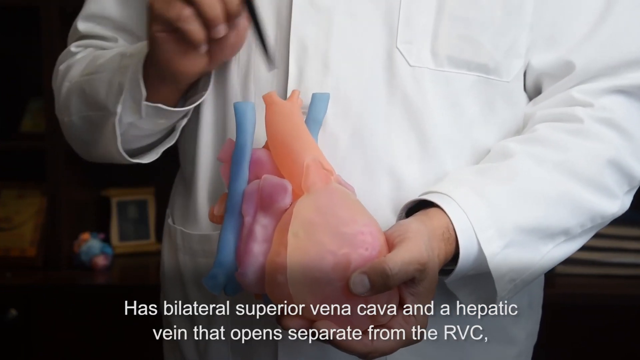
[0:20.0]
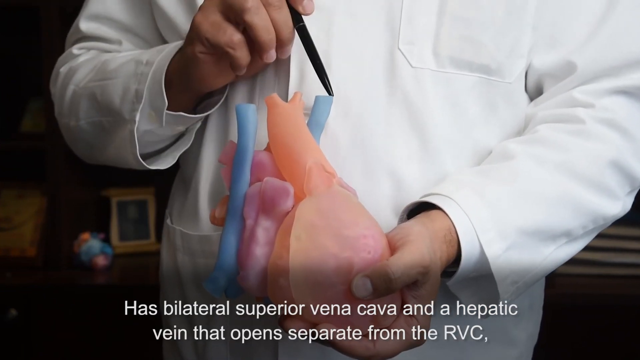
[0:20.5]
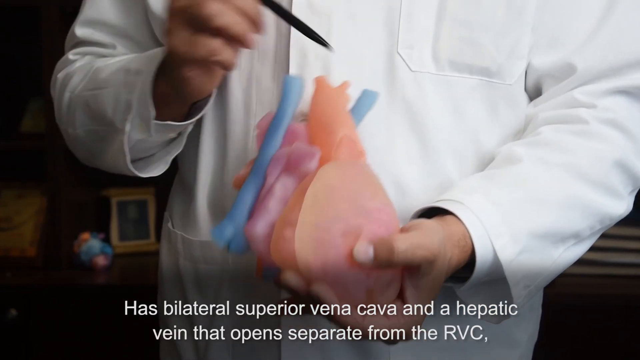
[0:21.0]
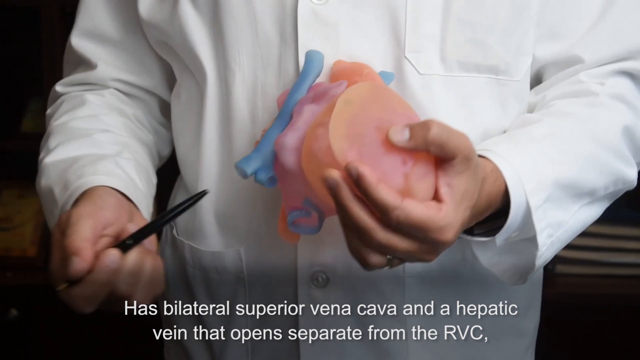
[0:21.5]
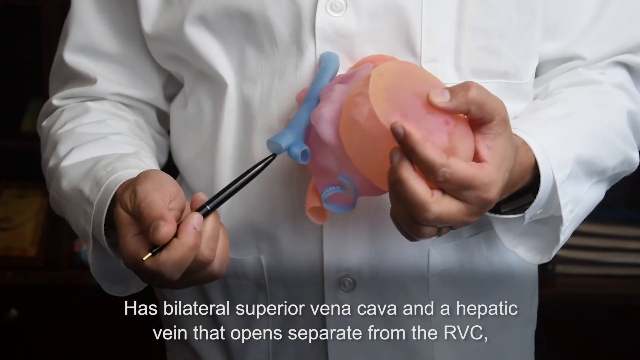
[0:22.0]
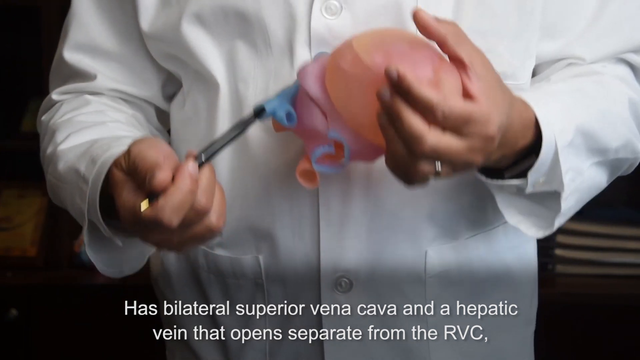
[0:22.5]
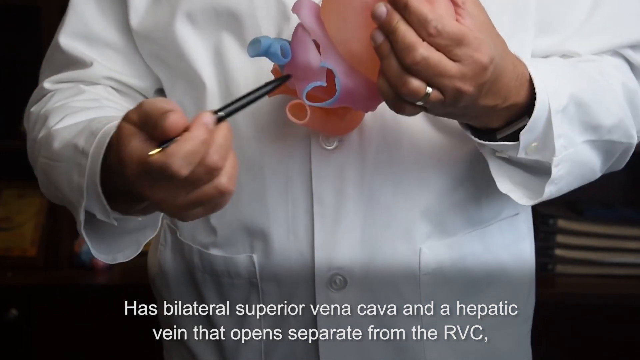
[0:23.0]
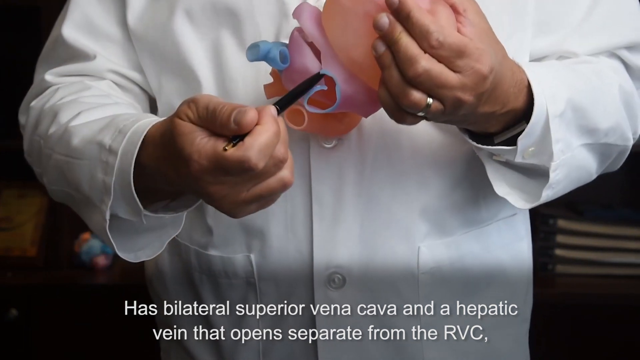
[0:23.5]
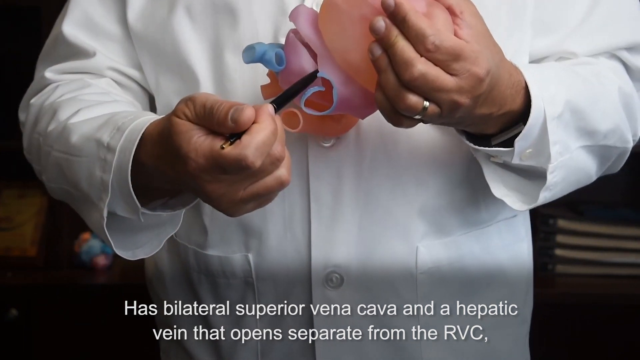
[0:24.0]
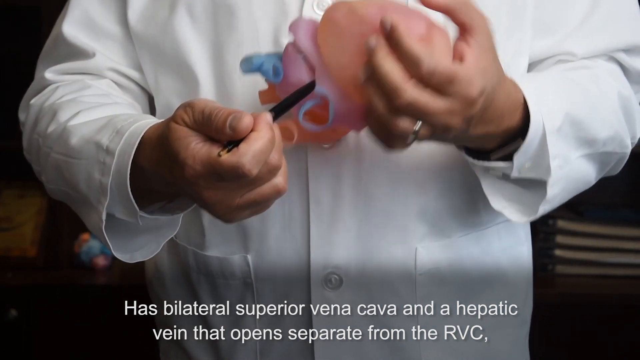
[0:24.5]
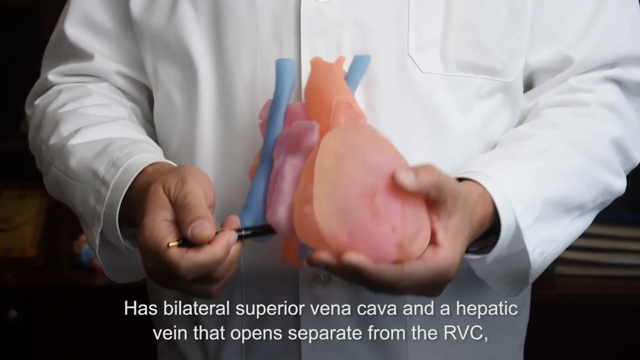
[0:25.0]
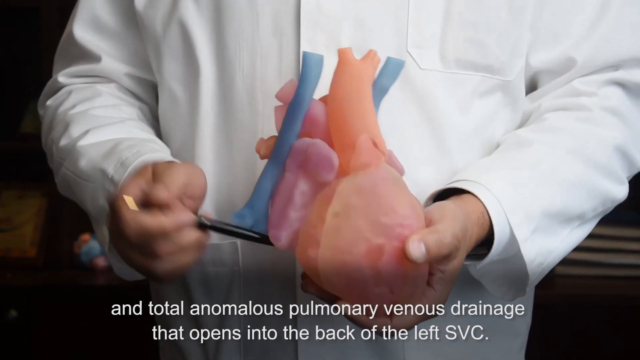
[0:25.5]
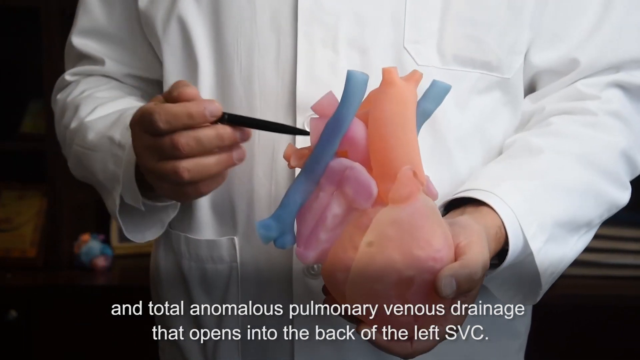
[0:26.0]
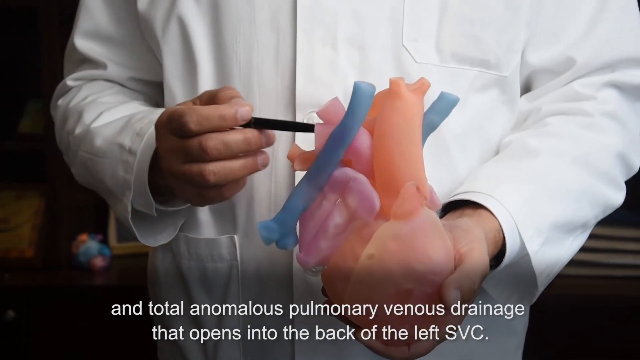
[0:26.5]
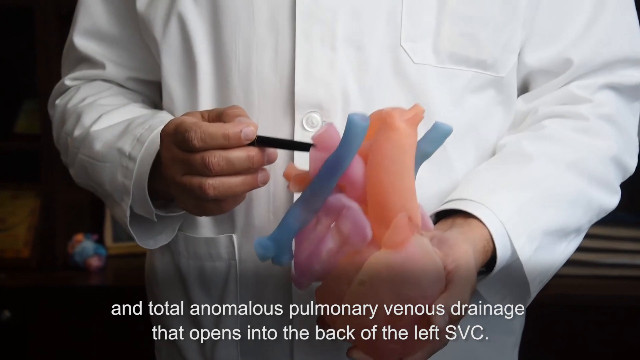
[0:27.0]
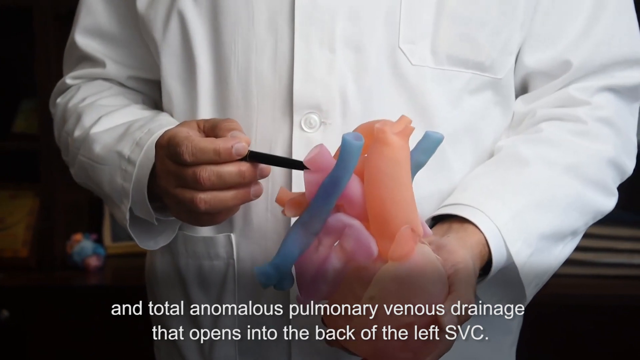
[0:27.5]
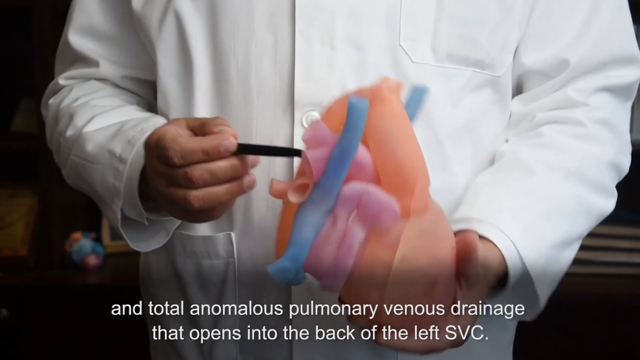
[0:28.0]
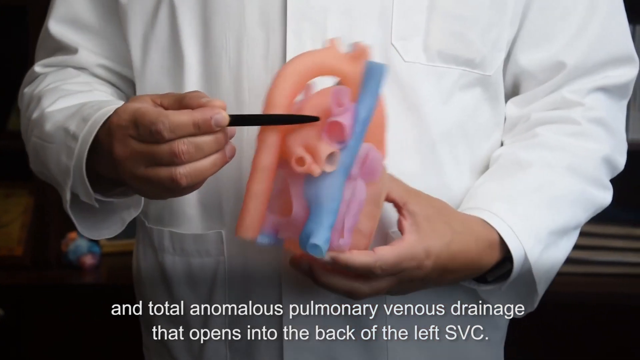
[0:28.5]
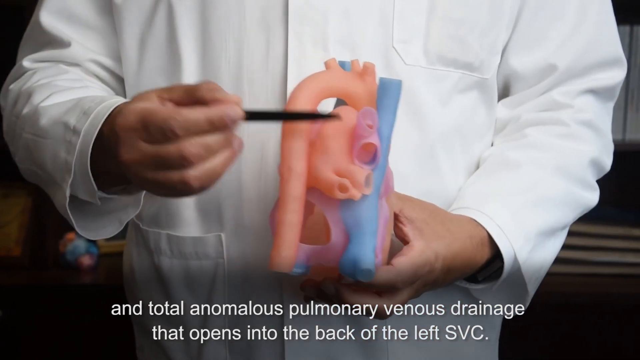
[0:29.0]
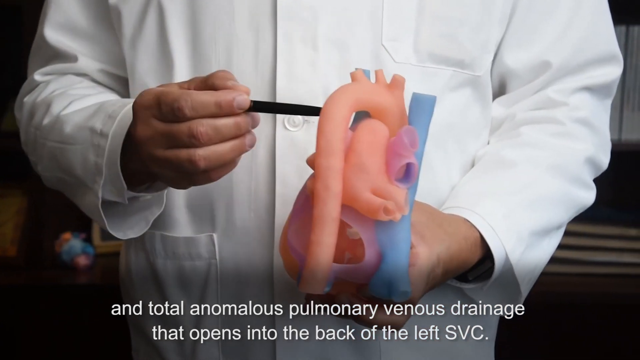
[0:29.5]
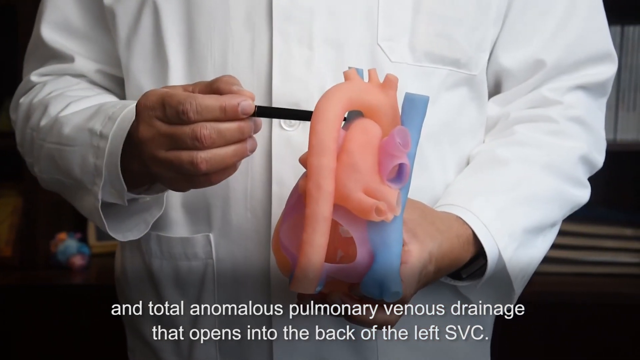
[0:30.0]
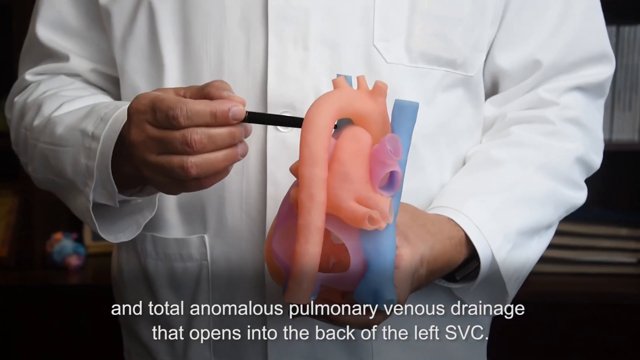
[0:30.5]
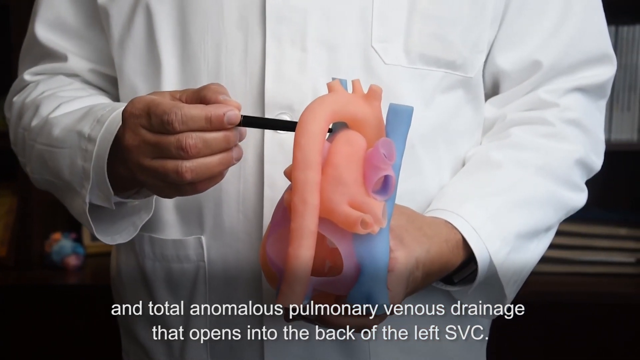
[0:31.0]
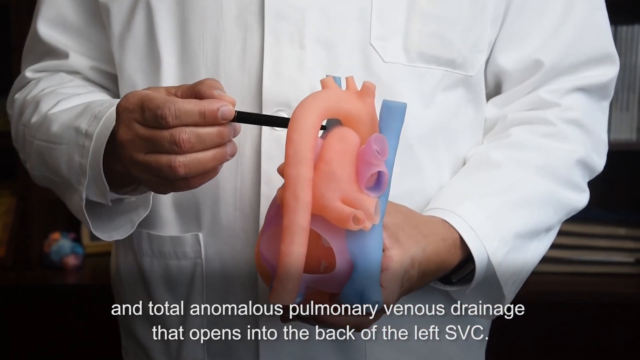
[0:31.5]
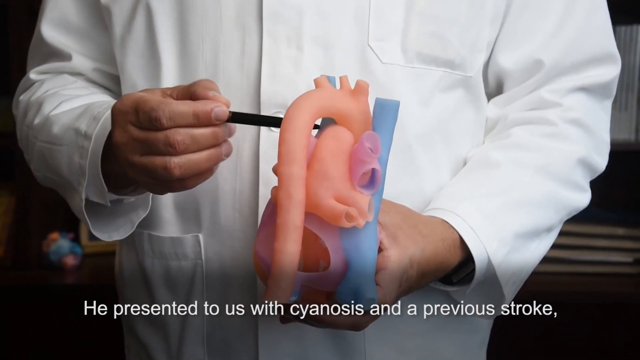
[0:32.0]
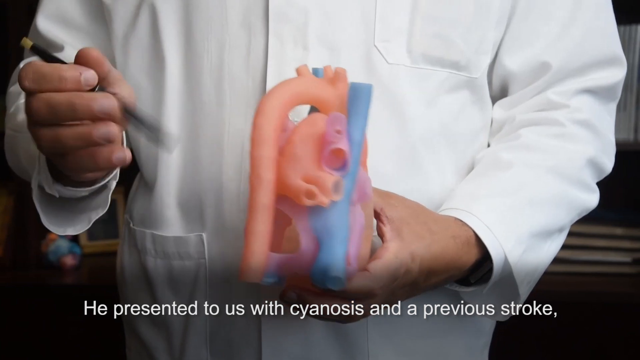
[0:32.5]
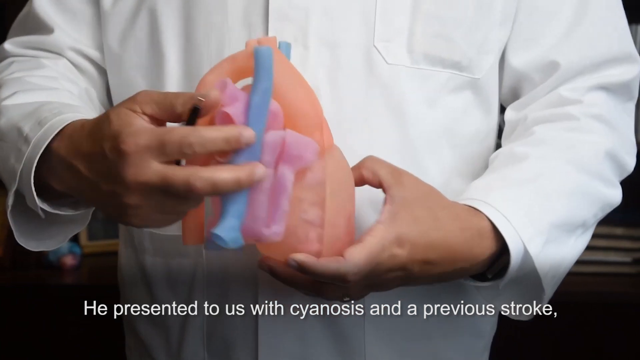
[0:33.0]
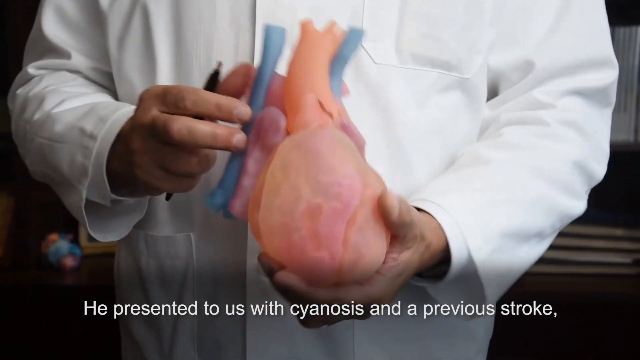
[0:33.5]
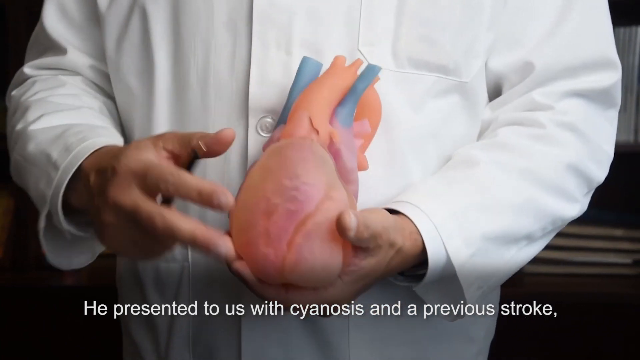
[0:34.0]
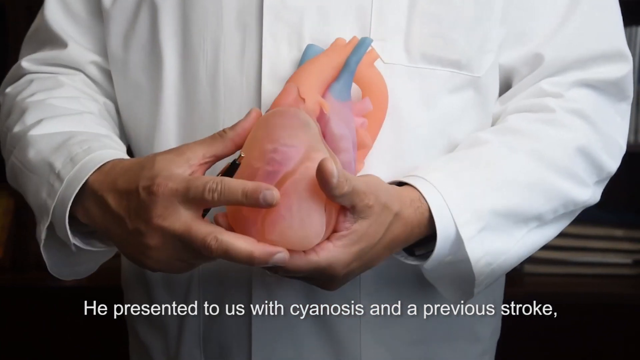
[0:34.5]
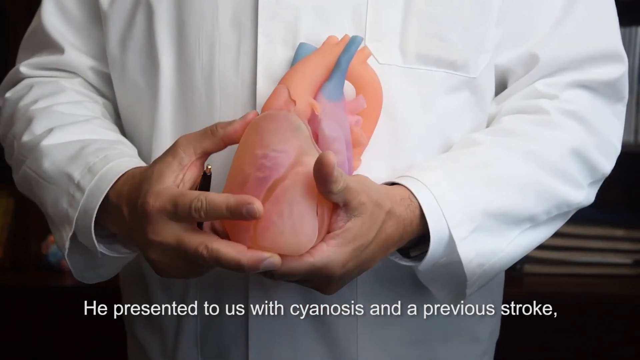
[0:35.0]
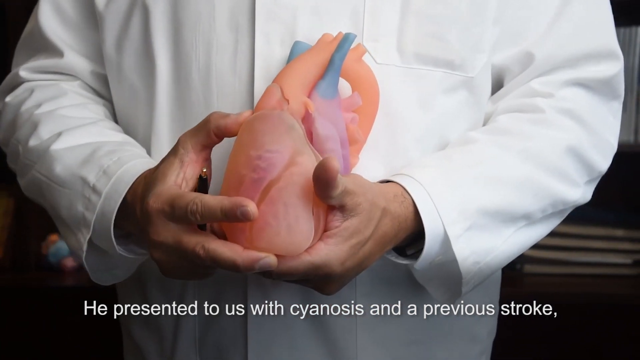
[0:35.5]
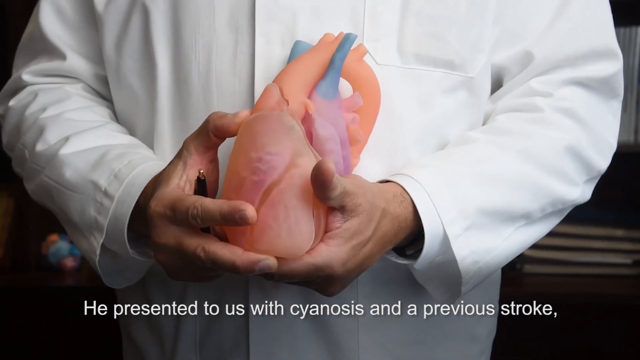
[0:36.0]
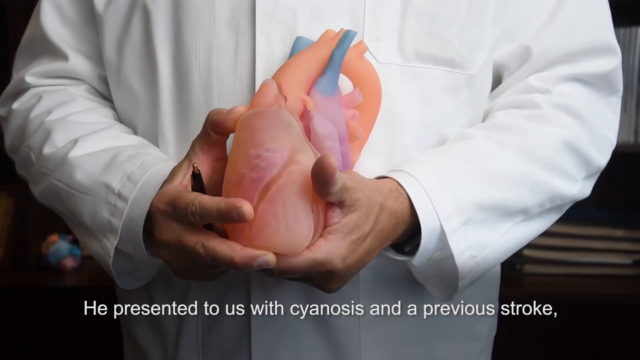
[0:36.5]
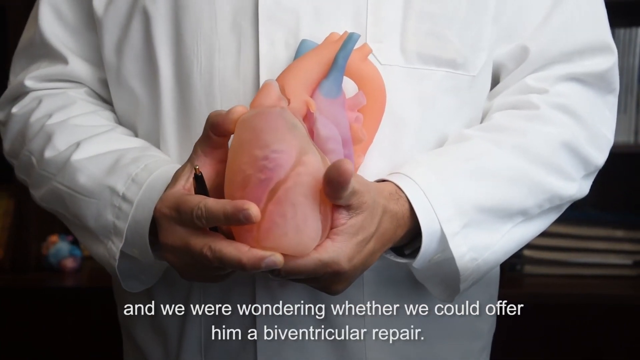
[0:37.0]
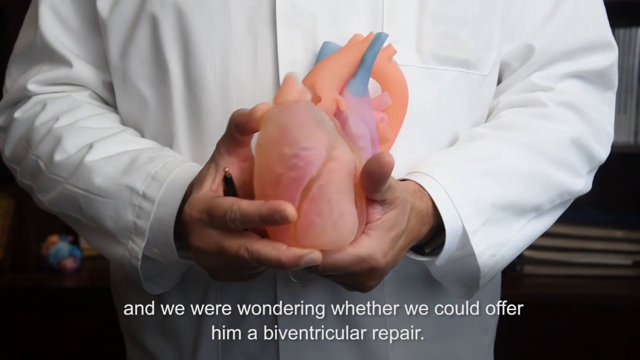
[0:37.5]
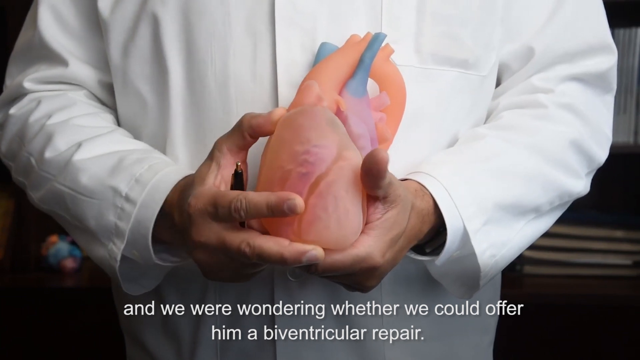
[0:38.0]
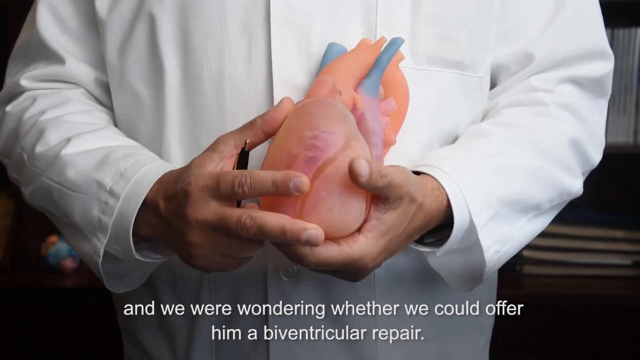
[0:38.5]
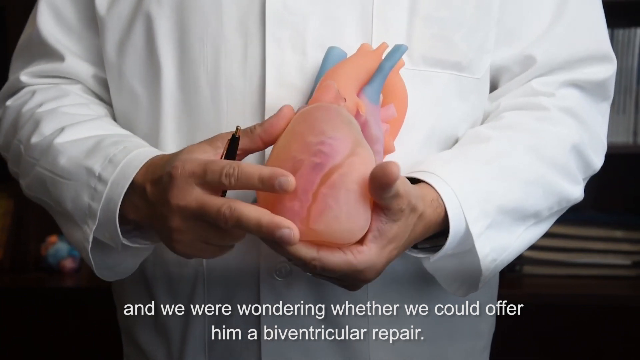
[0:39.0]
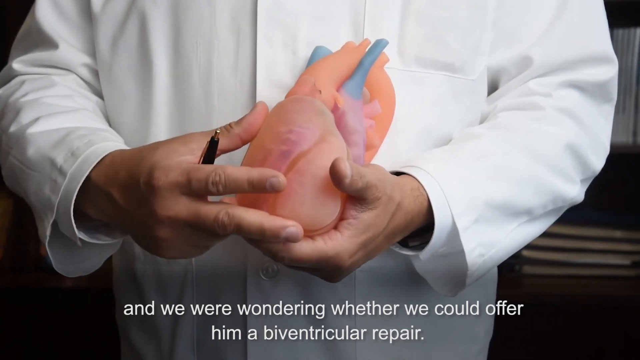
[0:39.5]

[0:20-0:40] Text in the video describes the patient as having bilateral superior vena cava and a hepatic vein that opens separate from the RBC, along with total anomalous pulmonary venous drainage. He presented with cyanosis.